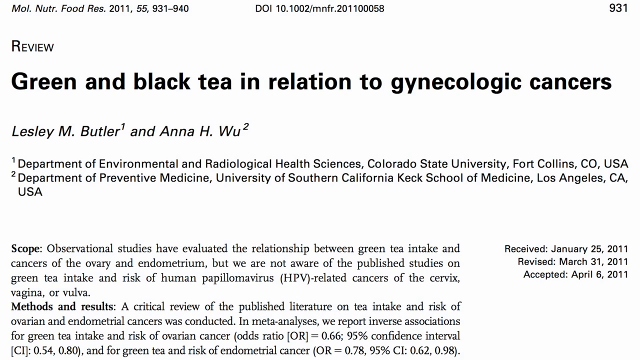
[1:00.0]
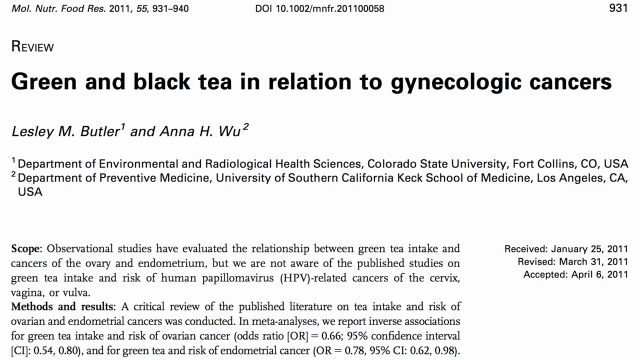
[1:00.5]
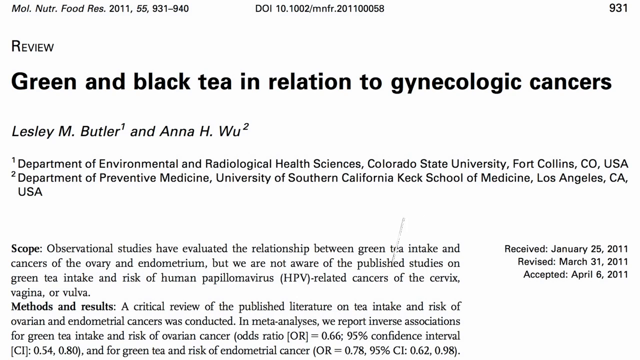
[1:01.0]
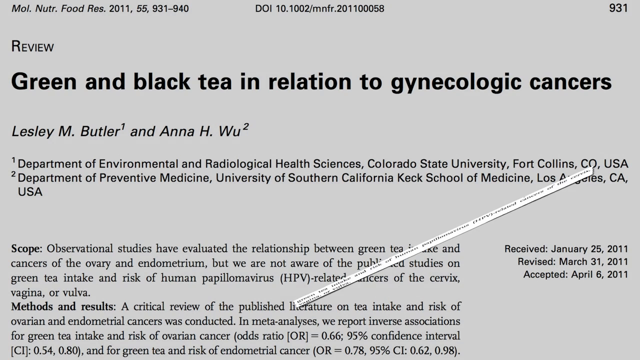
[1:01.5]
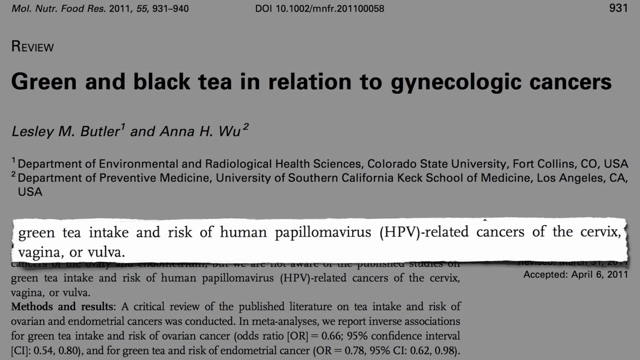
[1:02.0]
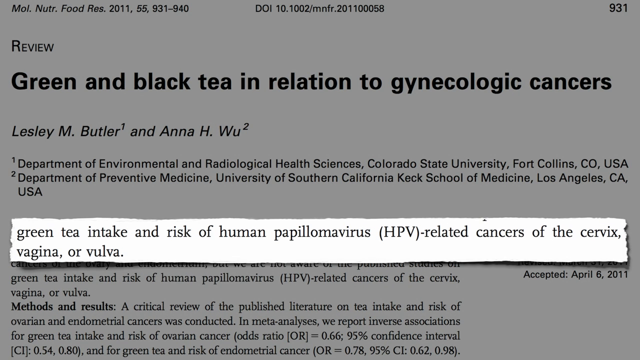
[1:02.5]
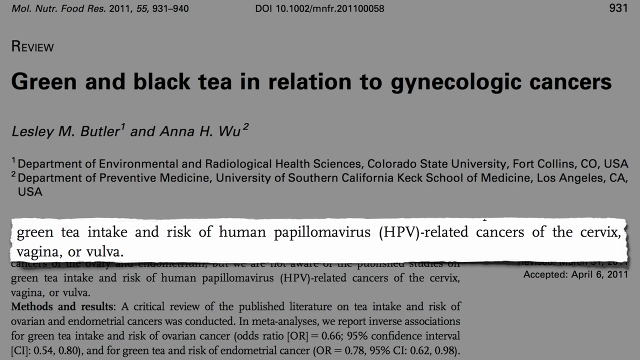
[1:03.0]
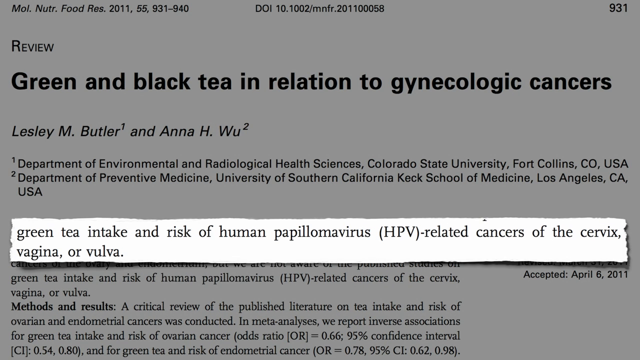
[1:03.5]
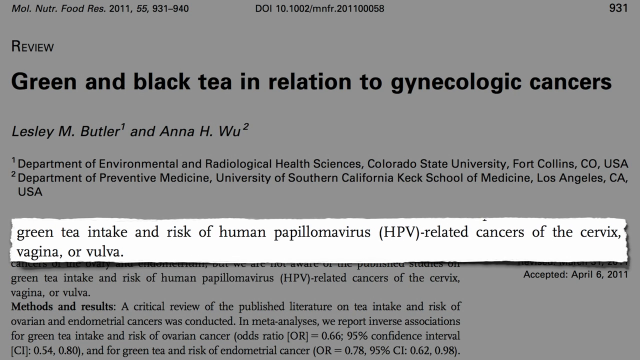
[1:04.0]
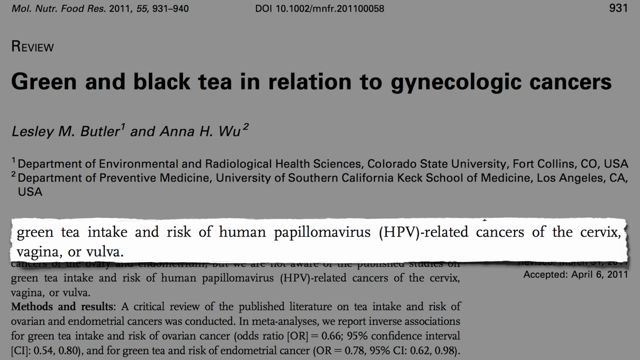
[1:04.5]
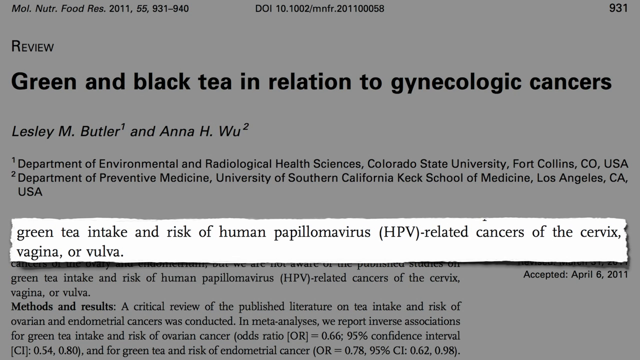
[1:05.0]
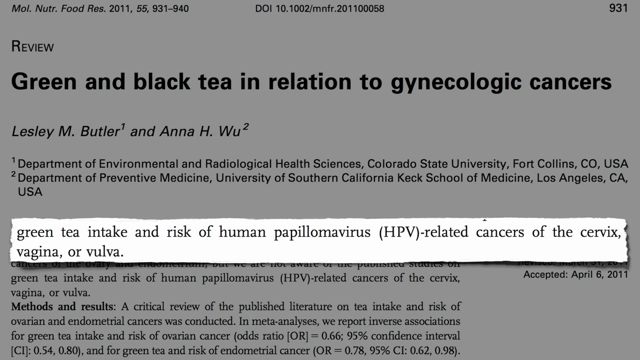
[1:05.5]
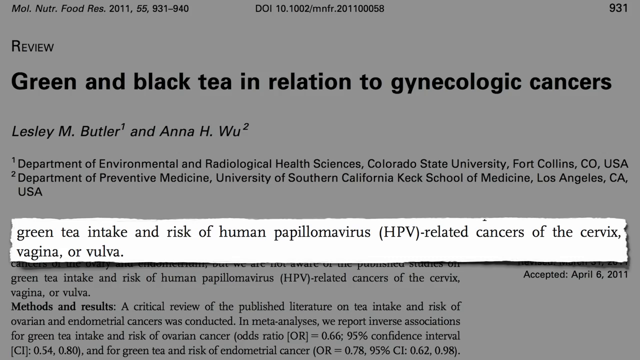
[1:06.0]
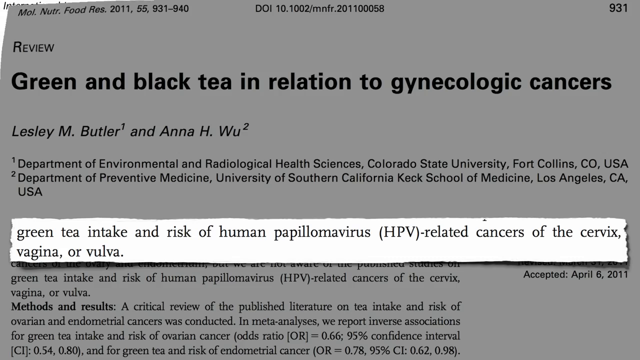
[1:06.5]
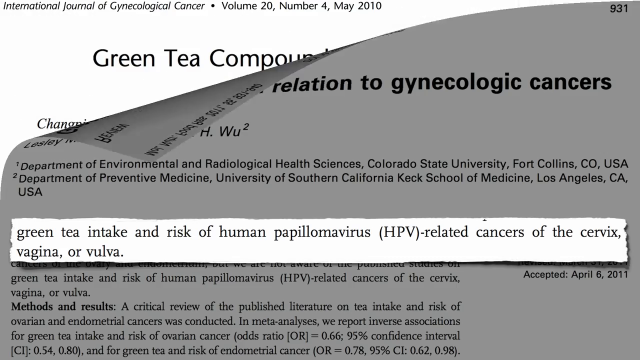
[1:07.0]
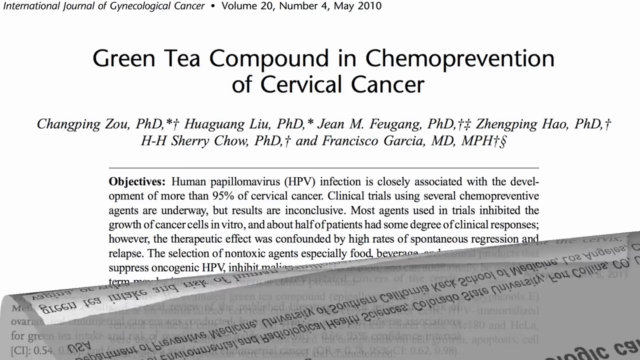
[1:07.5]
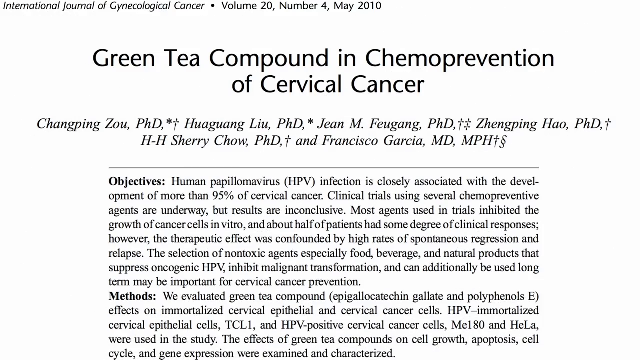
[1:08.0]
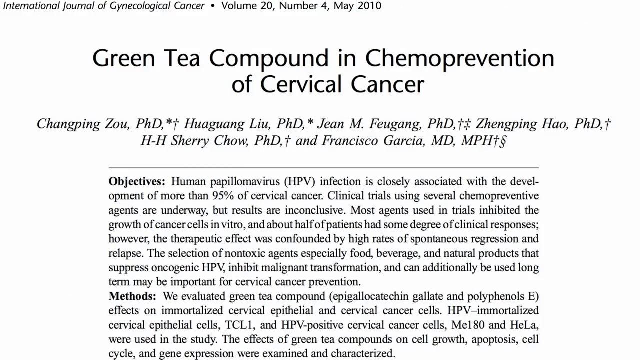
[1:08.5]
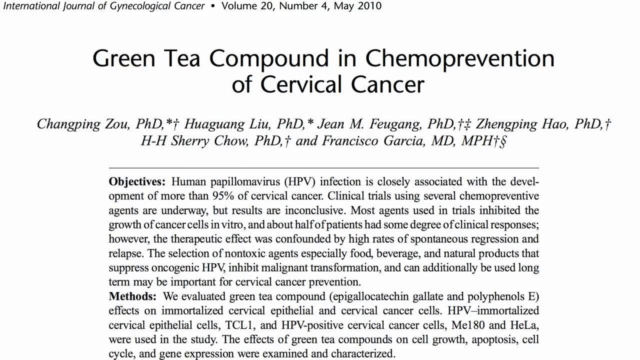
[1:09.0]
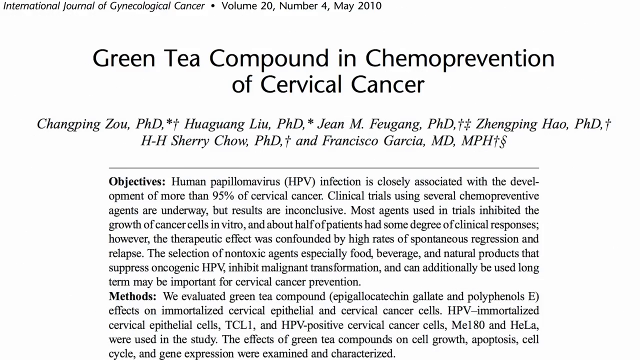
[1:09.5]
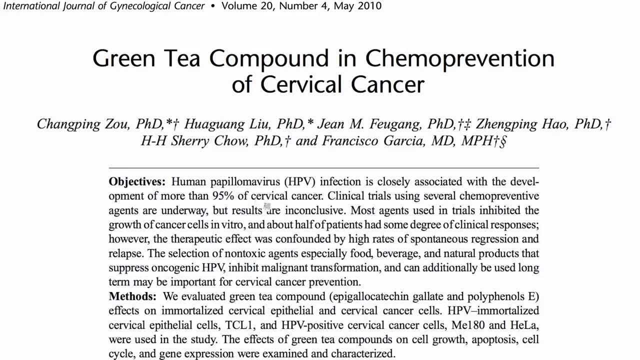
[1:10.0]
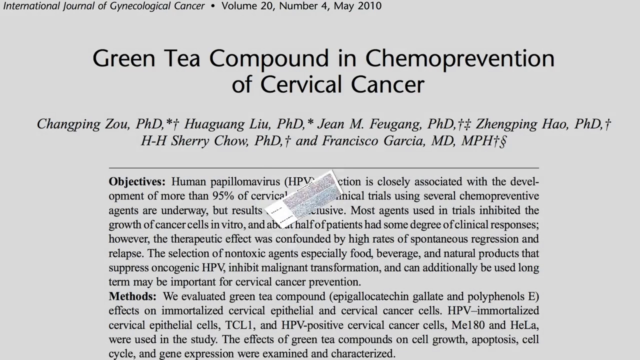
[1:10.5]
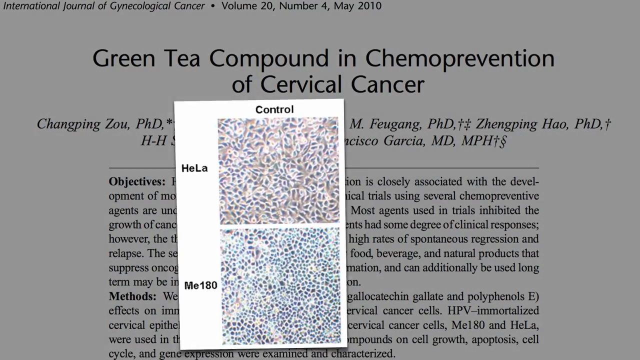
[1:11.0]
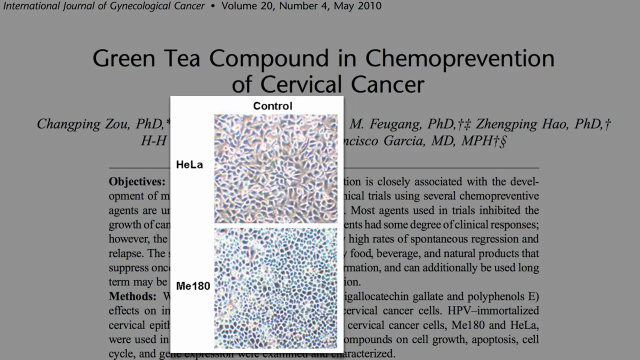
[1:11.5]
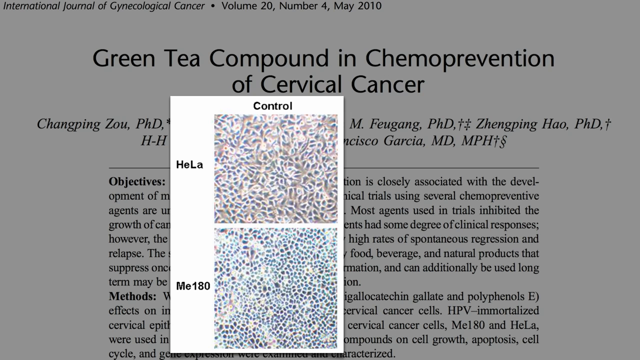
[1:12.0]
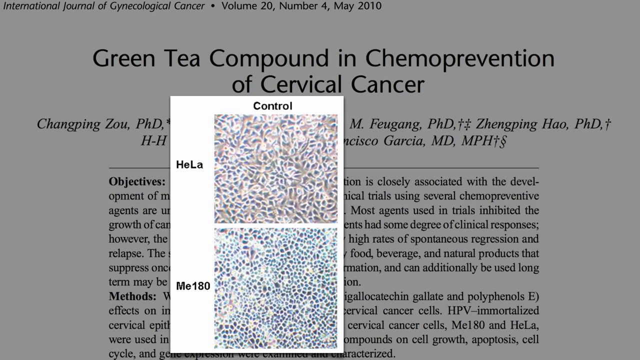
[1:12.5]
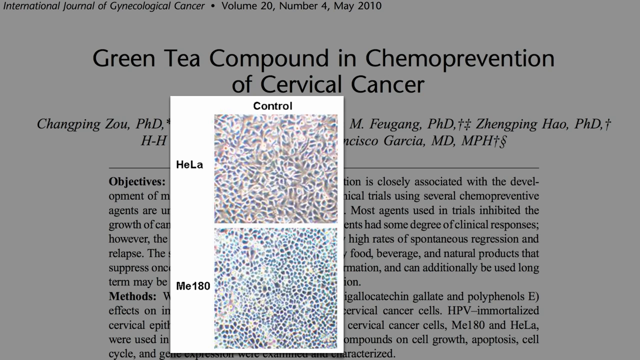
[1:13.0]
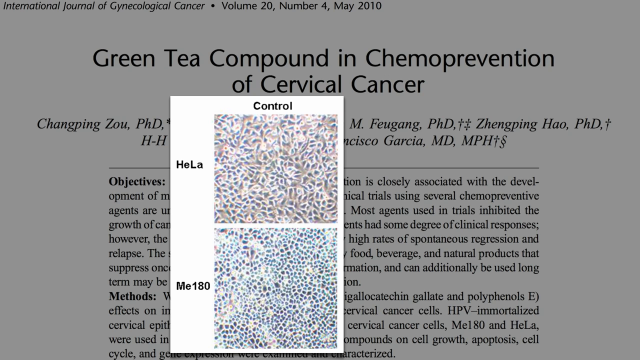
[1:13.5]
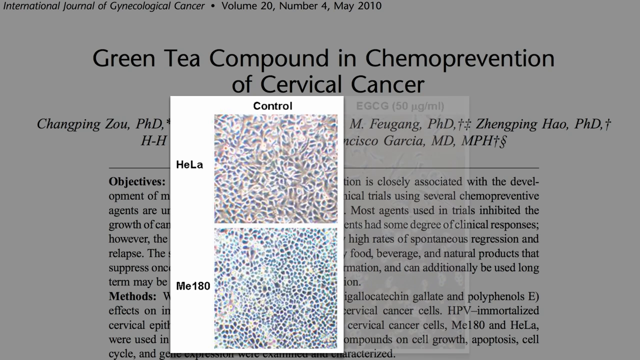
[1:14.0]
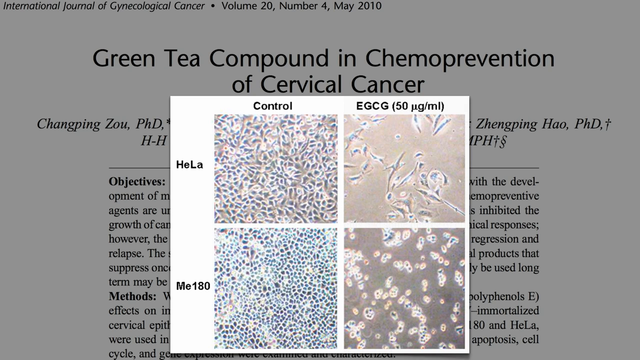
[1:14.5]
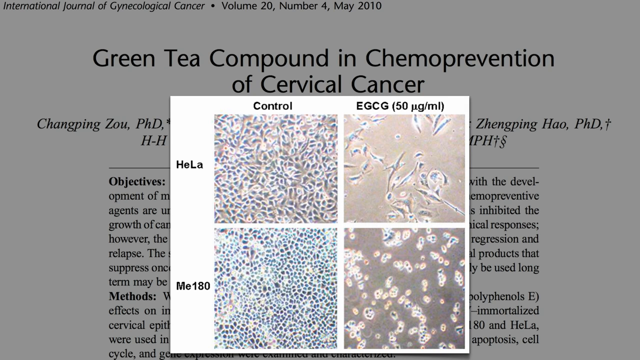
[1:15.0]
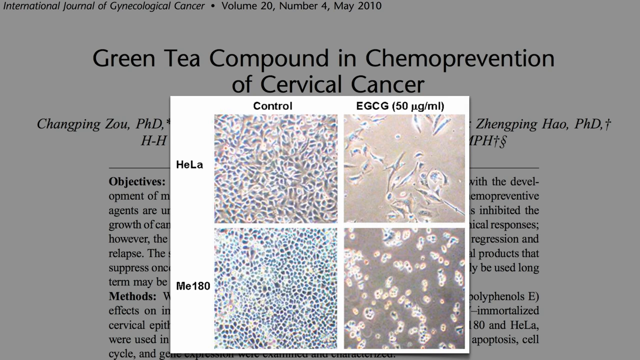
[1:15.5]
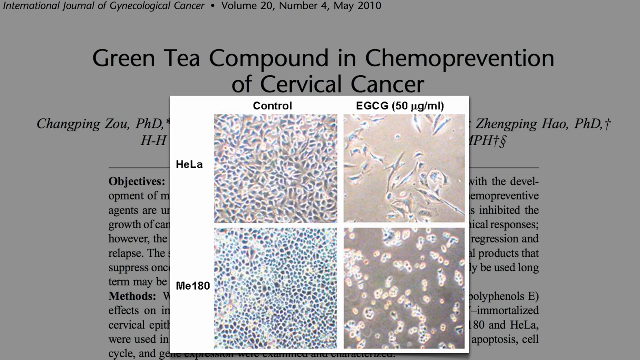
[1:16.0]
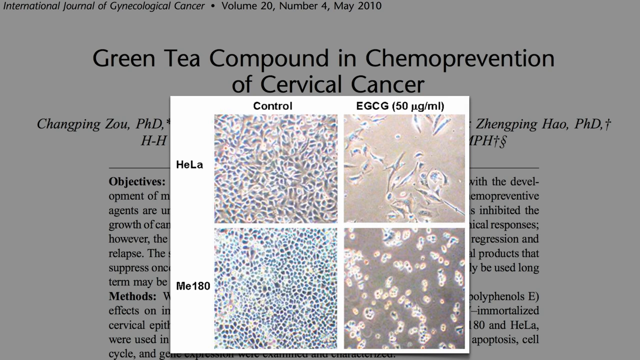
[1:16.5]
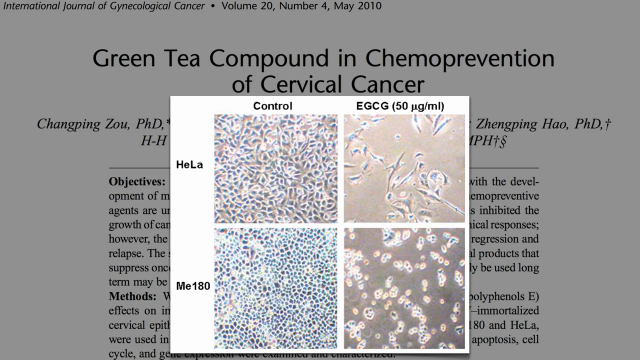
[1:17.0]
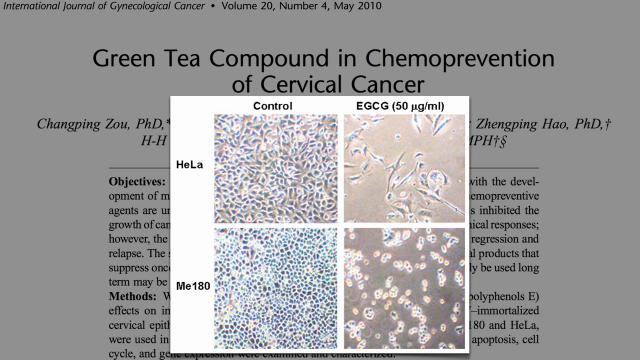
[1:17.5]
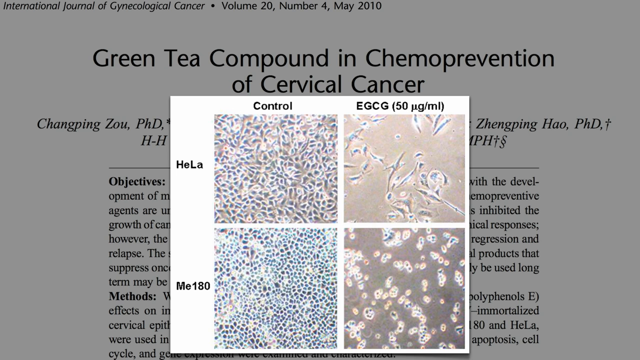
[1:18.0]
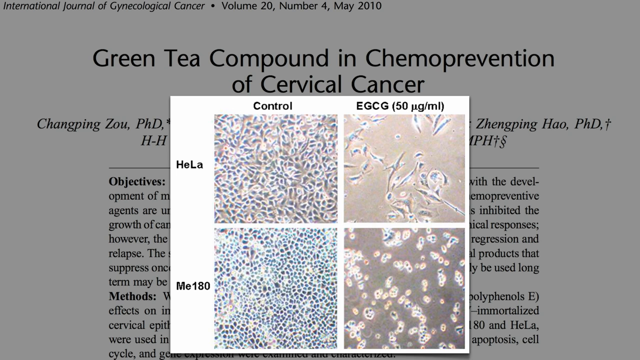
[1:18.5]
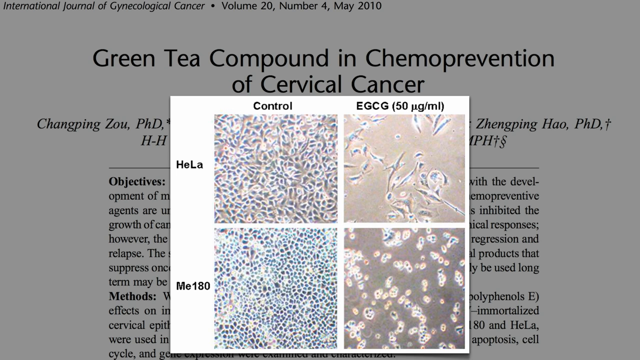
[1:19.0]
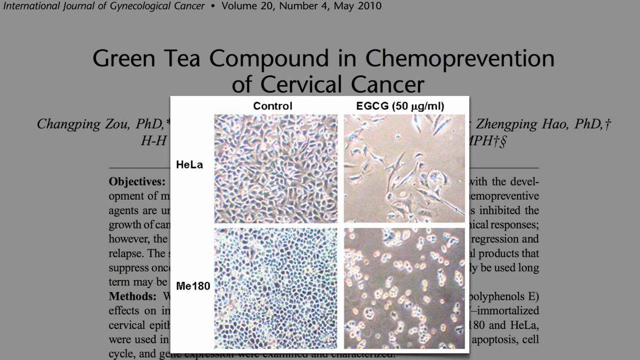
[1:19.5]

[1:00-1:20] A quote ripped from the green and black tea review reads, "Green tea intake and risk of human papillomavirus (HPV) related cancers of the cervix, vagina, or vulva." The article then peels away from the top left corner, revealing a new article from 2010 titled "Green Tea Compound in Chemo Prevention of Cervical Cancer." The screenshot shows multiple authors, the objectives, and a small part of the methods. It is from the International Journal of Gynecological Cancer. After a few segments of revealing this article, a diagram of macroscopic images is overlaid on top of it, with labels reading "Control," "EGCG," "HeLa," and "Me180." The images are arranged in a 2x2 layout and appear to show cells of some sort in differing stages depending on the variables involved.